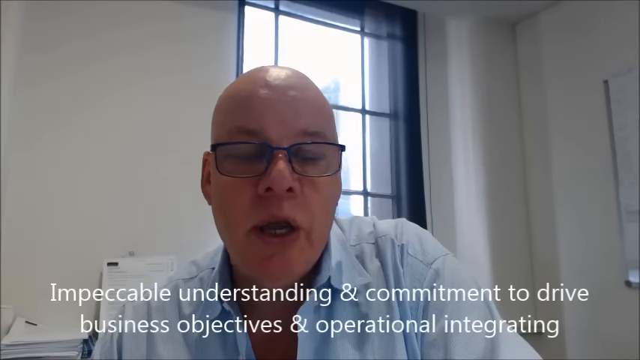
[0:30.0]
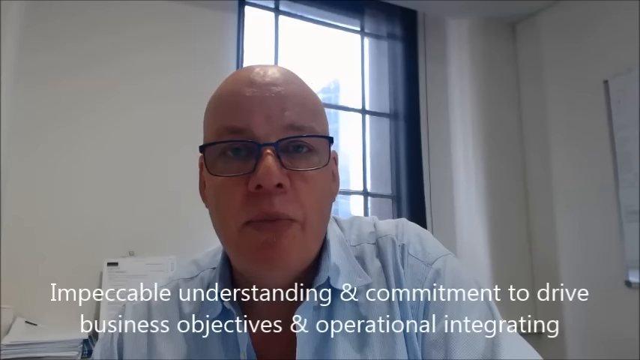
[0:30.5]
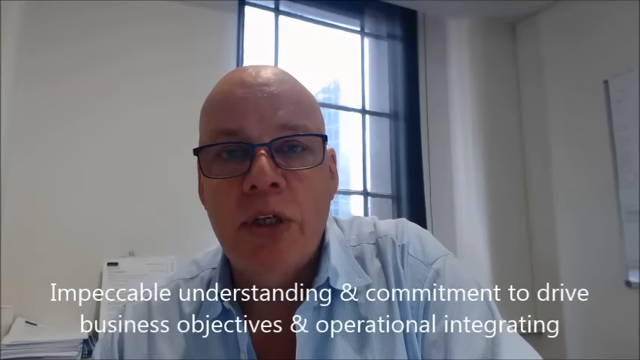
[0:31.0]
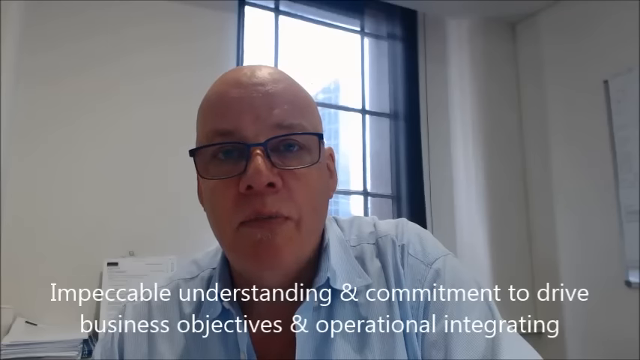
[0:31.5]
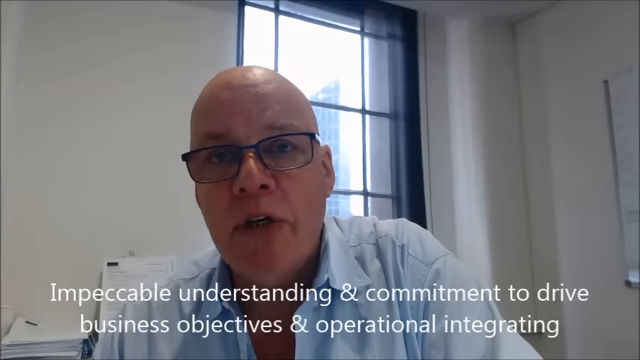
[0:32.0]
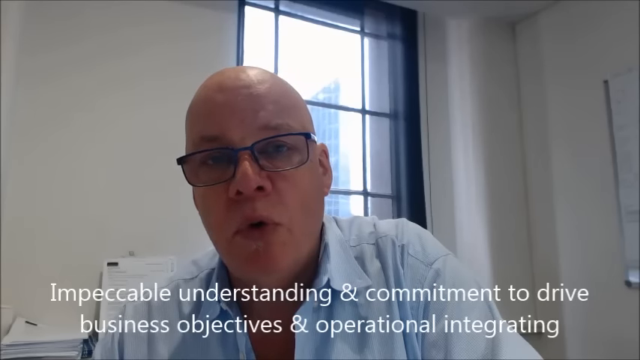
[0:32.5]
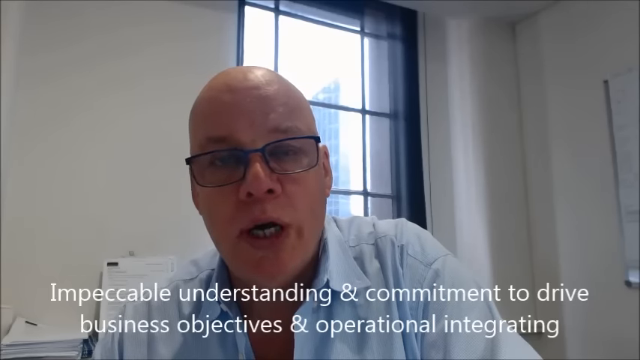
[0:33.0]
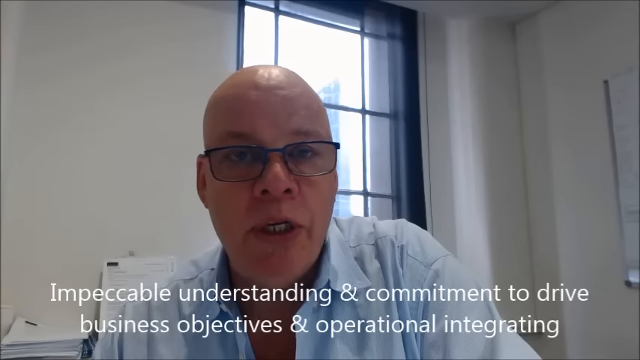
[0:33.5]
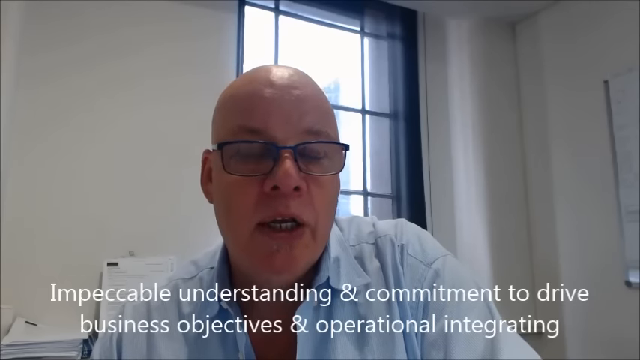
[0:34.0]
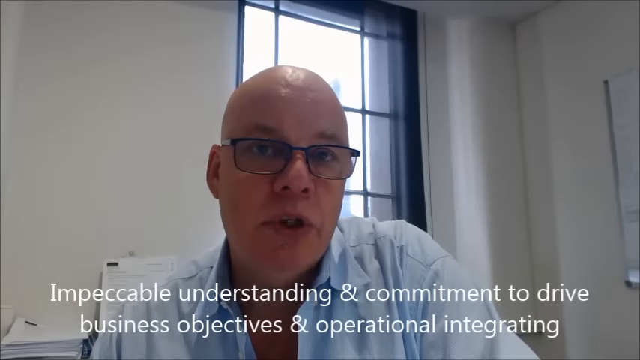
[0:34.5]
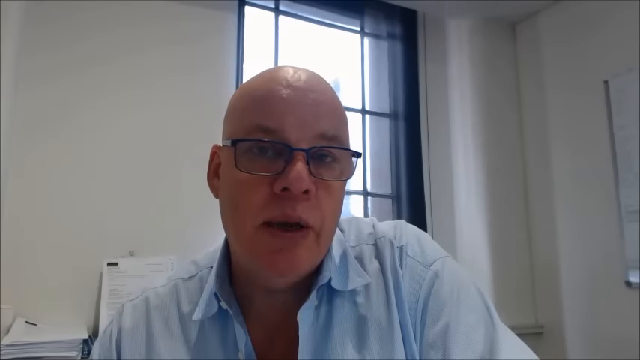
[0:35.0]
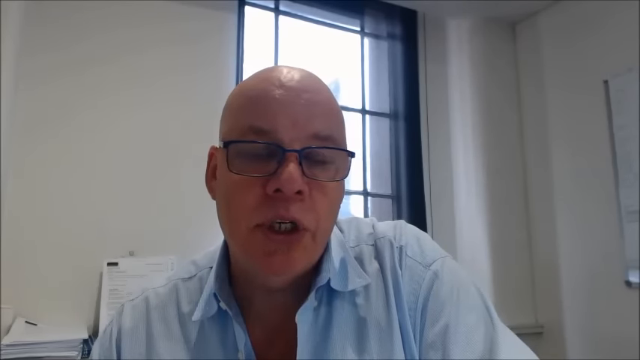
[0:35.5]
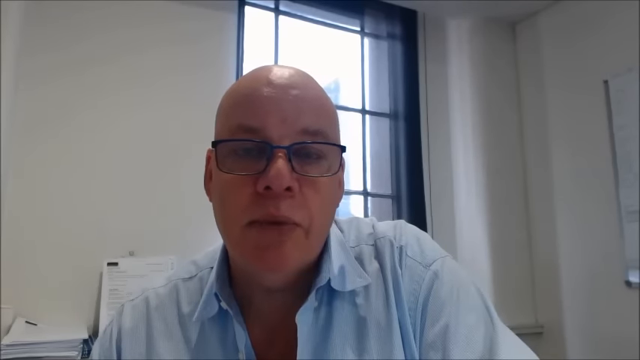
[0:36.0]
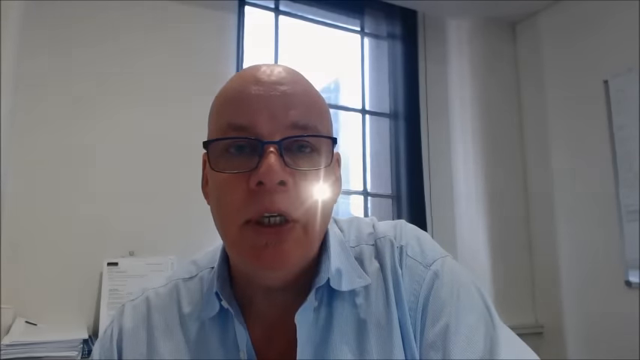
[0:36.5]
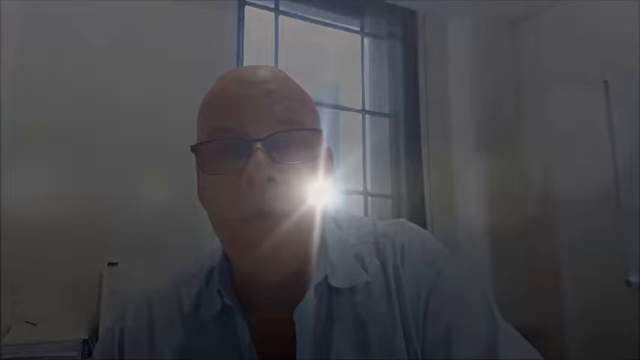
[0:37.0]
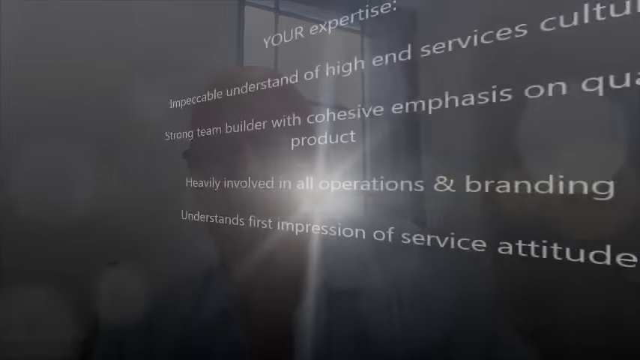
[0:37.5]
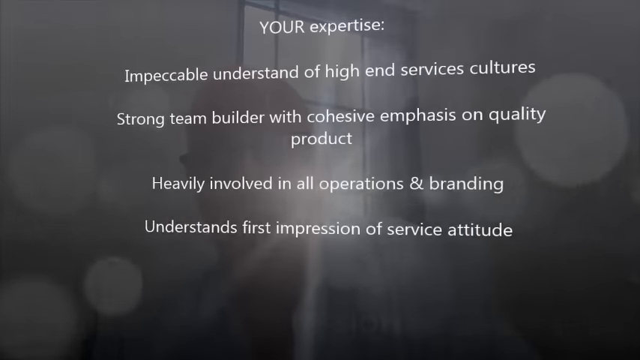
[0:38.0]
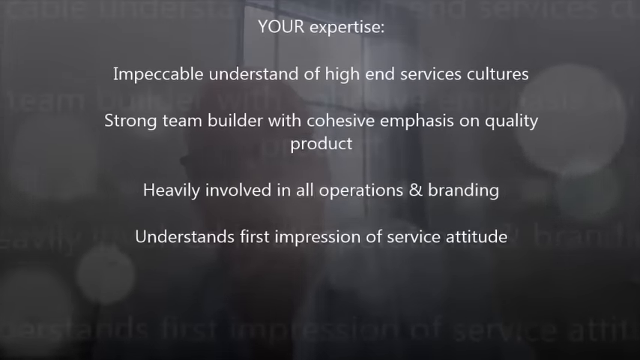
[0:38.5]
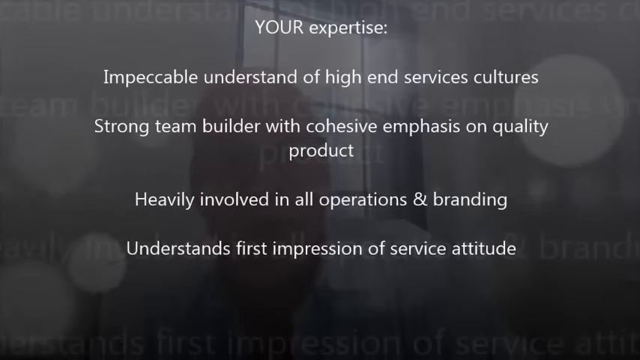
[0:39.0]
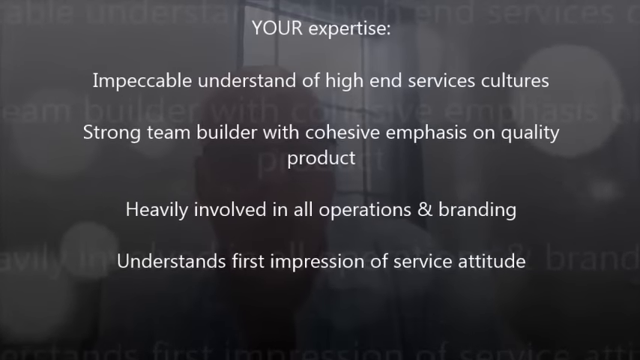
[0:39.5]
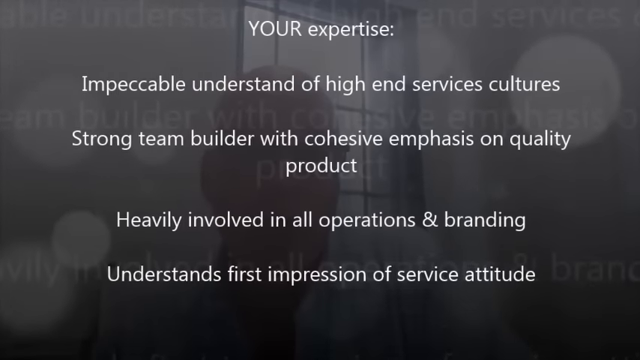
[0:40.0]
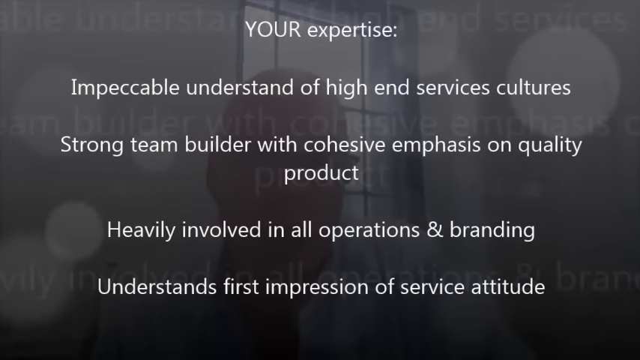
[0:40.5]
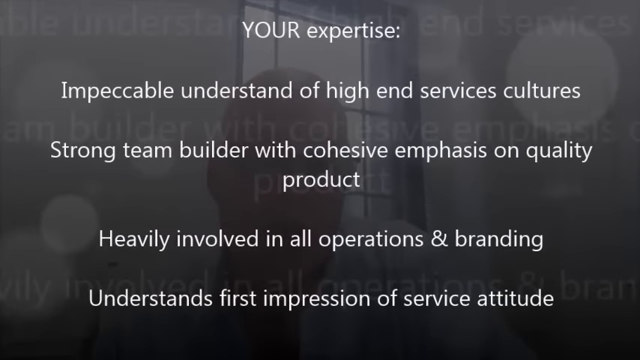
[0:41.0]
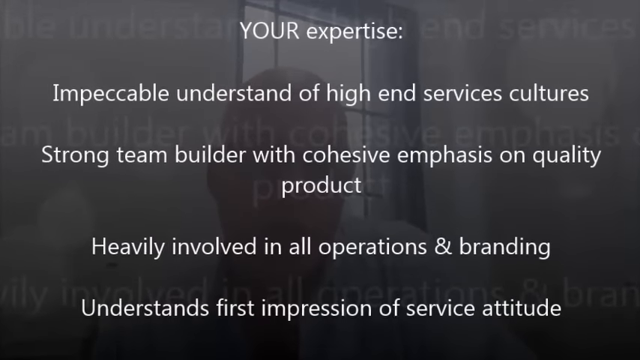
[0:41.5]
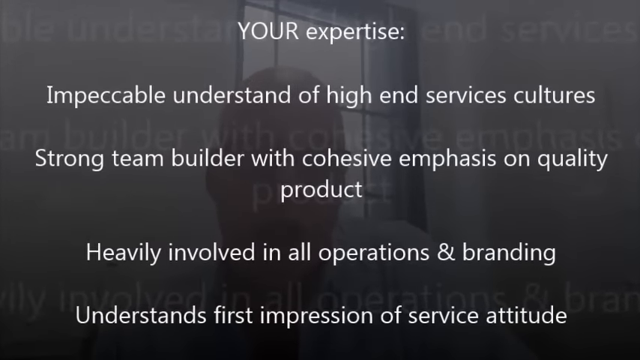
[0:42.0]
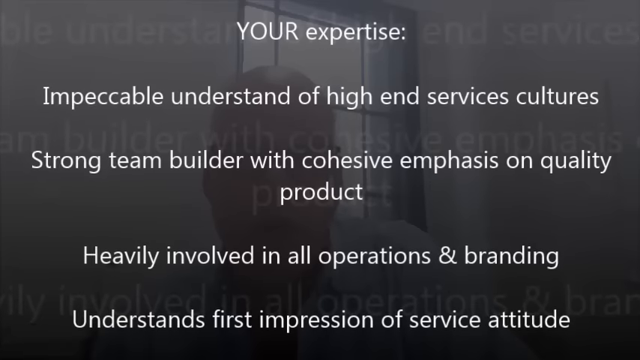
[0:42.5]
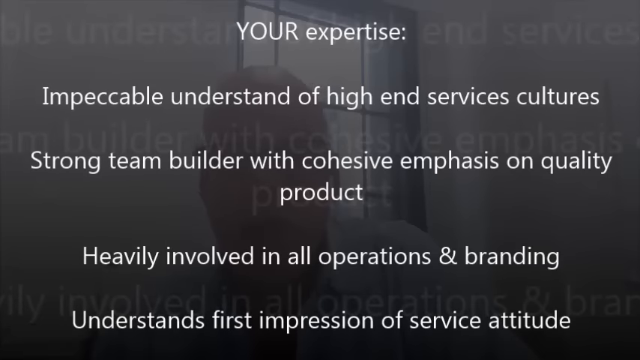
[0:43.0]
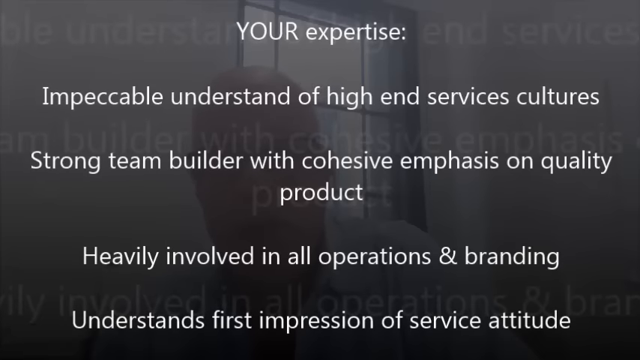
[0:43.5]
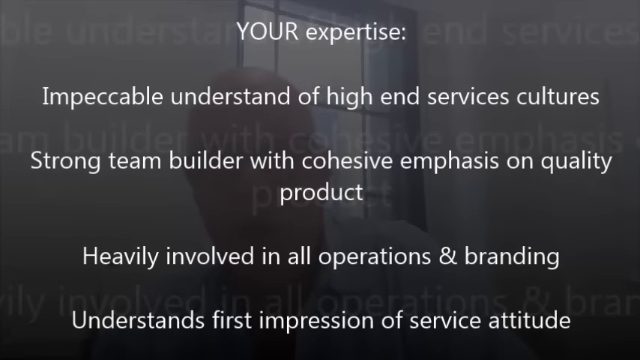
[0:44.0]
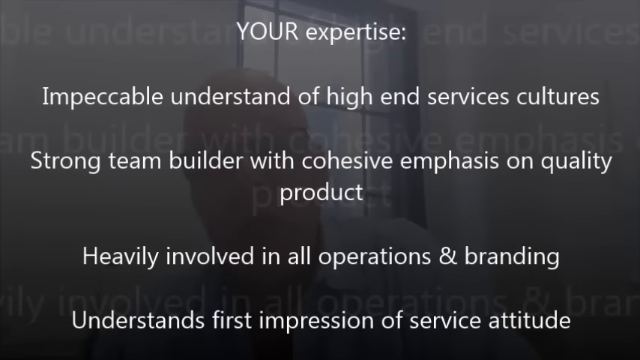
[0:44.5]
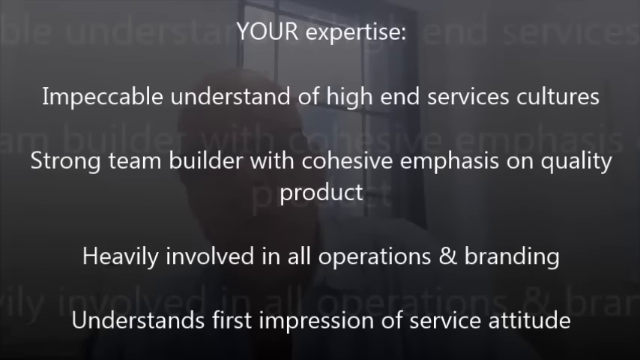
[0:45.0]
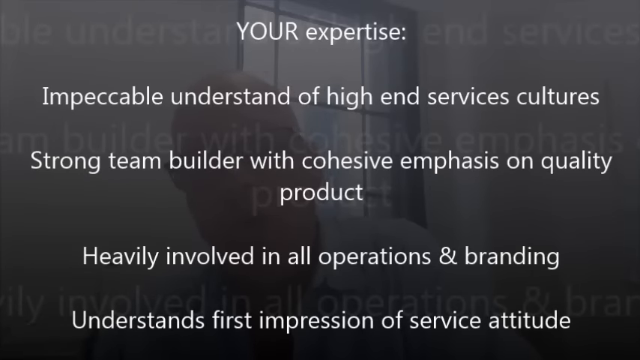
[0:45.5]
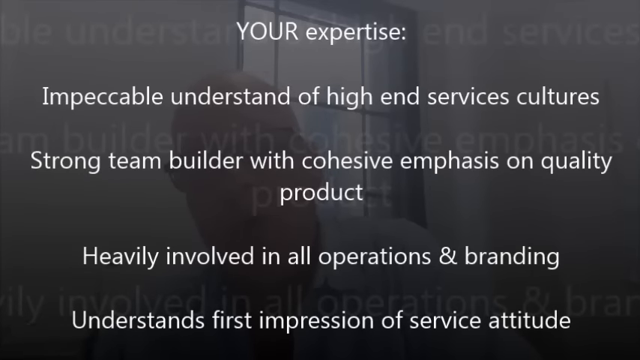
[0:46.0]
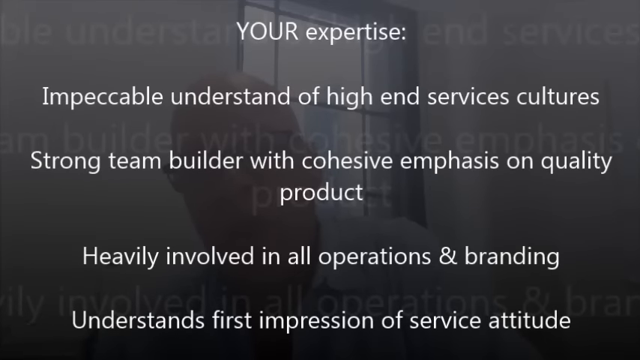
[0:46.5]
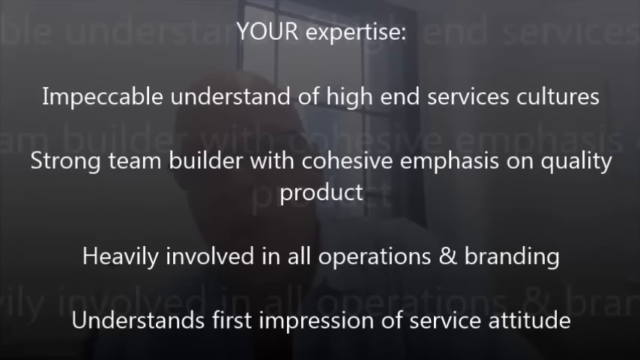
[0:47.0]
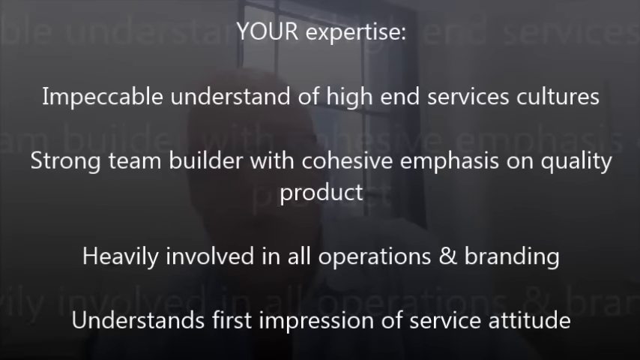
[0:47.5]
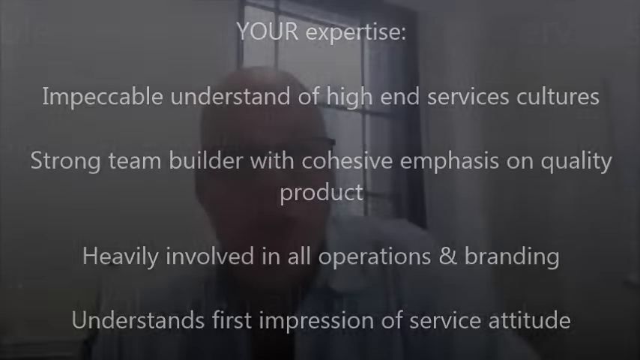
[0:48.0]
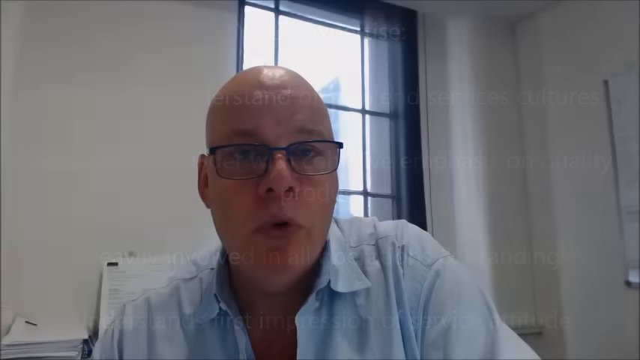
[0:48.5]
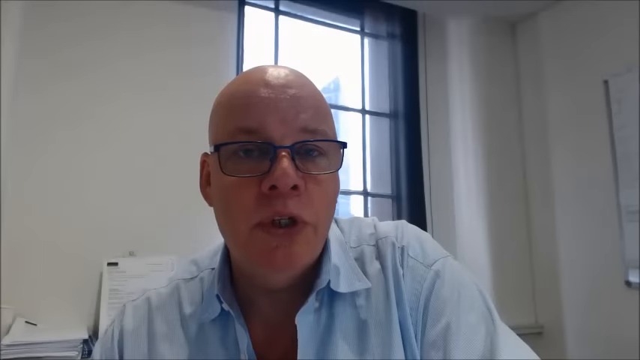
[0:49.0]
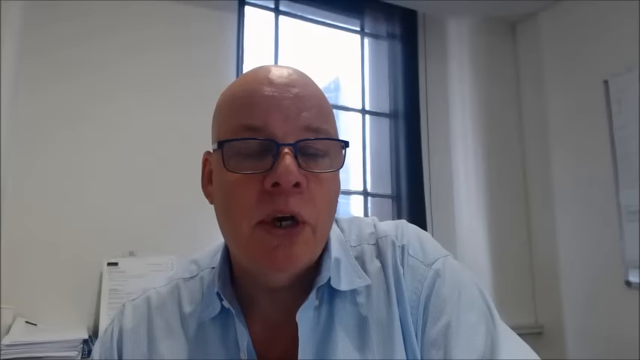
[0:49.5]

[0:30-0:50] A man, apparently the man in charge of the golf course club, appears. Text reads "impeccable understanding and commitment to drive business objectives and operational integrity." He is talking while looking at the camera. Then text under "your expertise" lists an impeccable understanding "of high-end service cultures," "strong team builder with cohesive emphasis on quality product," "heavily involved in all operations and branding," and "understands first impression of service attitude," while he talks in the background. He is then visible again. The walls behind him are white with not much on them, and it is daytime outside the window.